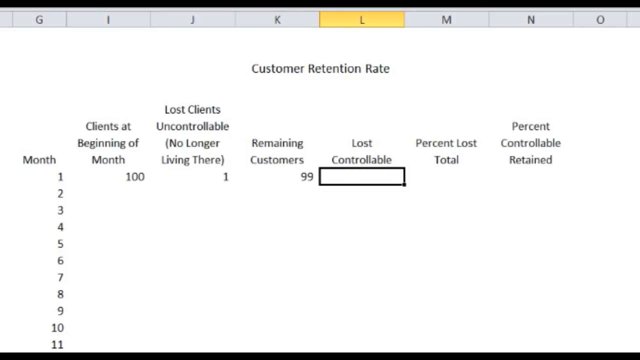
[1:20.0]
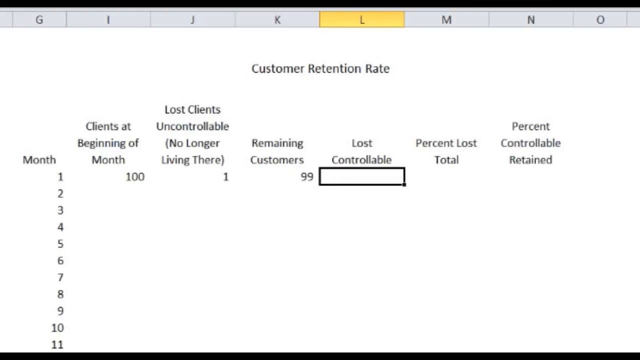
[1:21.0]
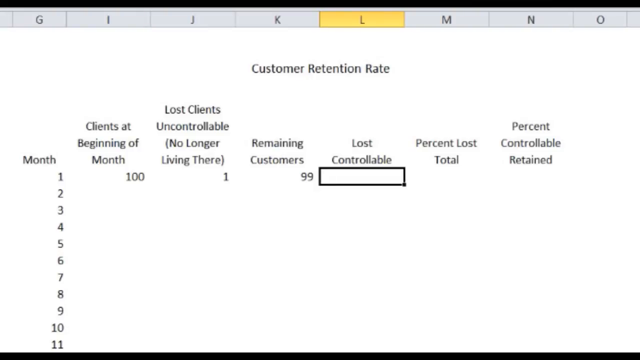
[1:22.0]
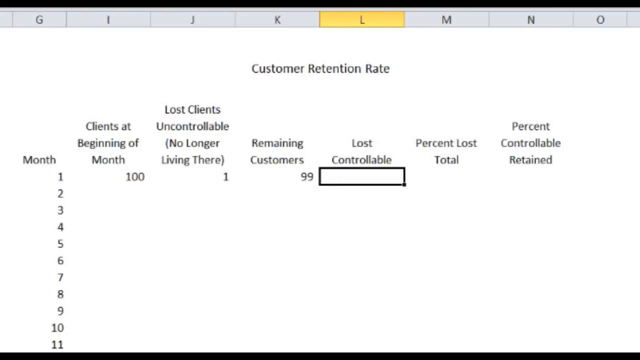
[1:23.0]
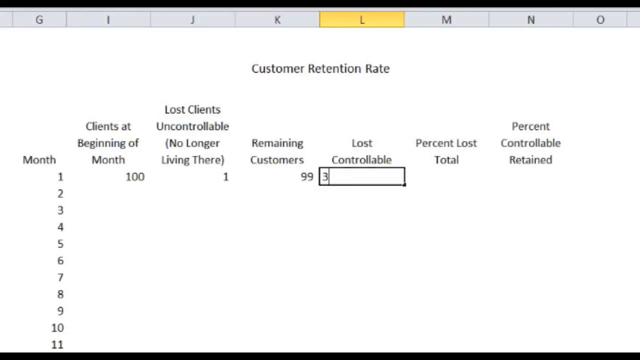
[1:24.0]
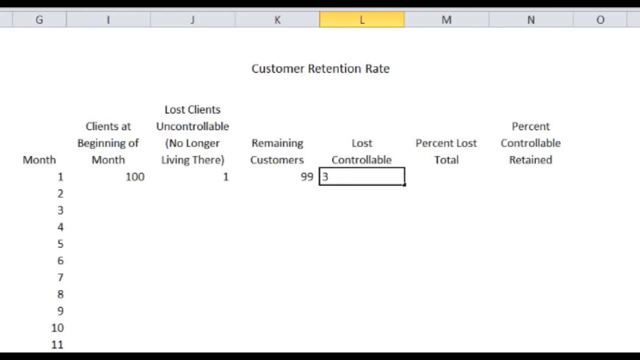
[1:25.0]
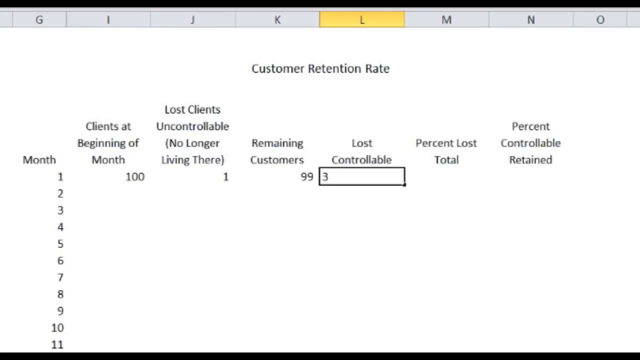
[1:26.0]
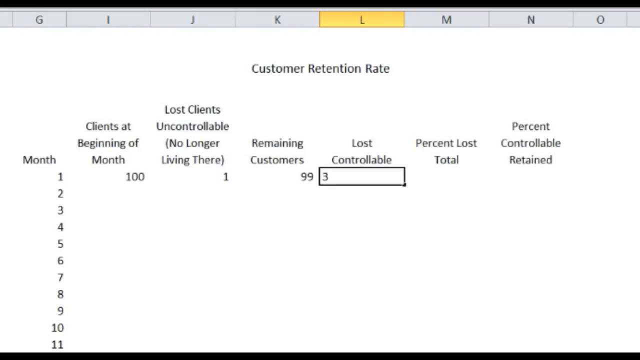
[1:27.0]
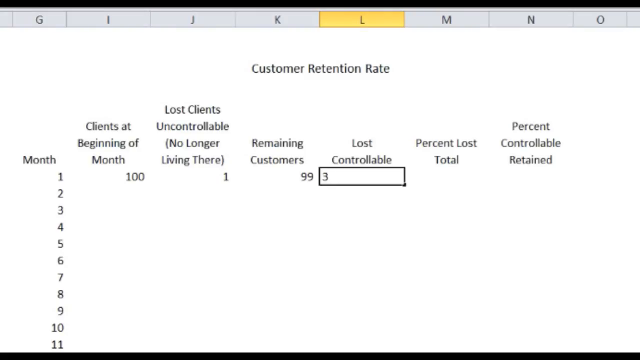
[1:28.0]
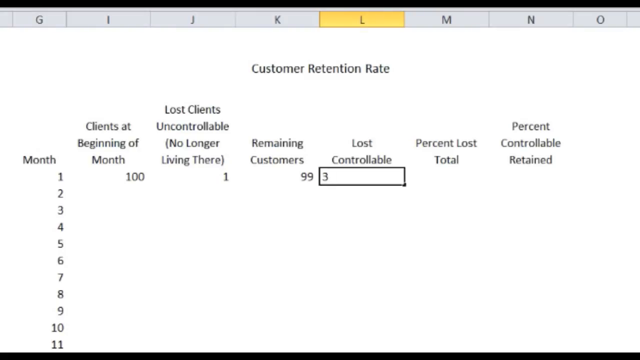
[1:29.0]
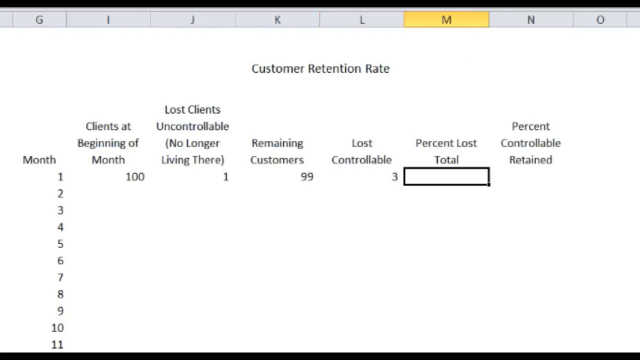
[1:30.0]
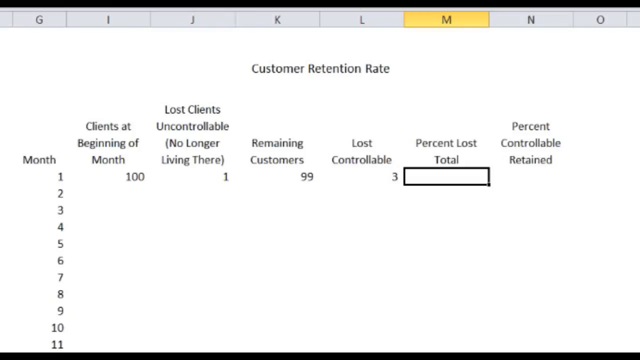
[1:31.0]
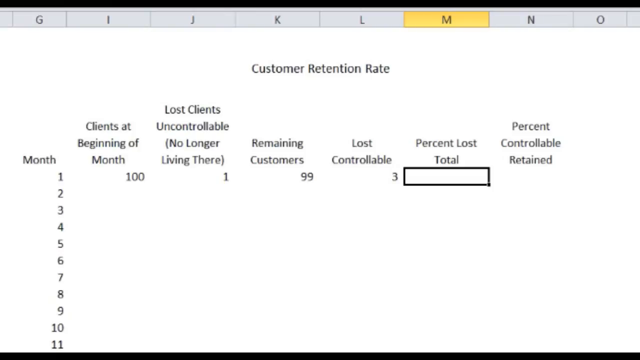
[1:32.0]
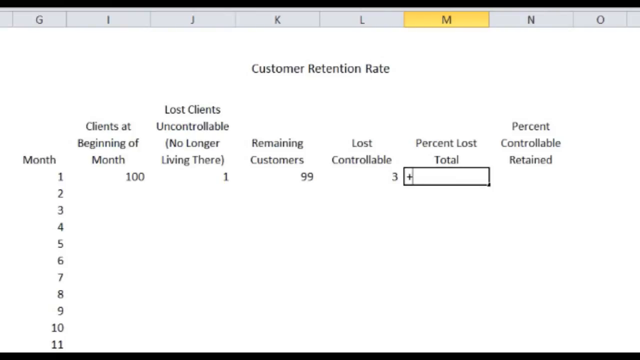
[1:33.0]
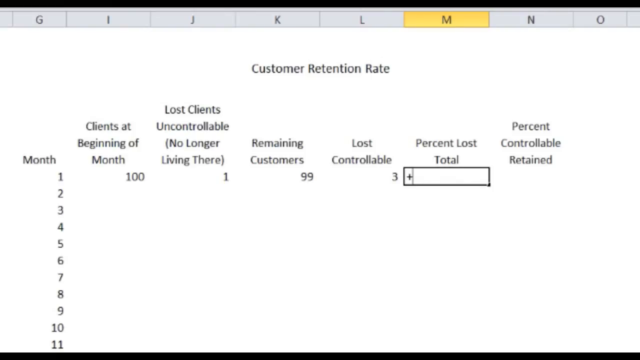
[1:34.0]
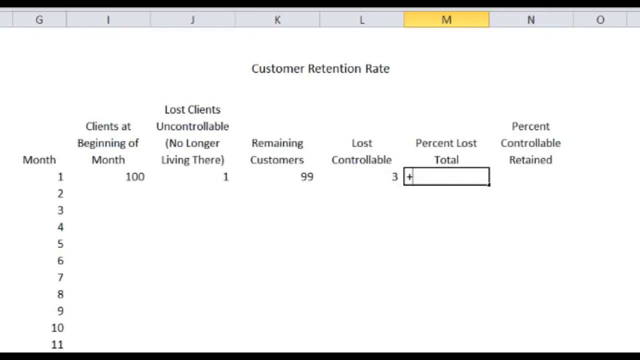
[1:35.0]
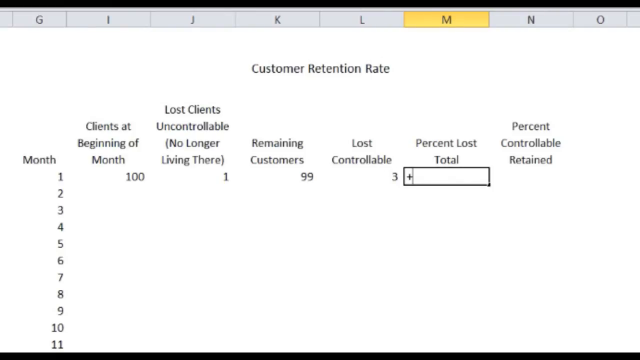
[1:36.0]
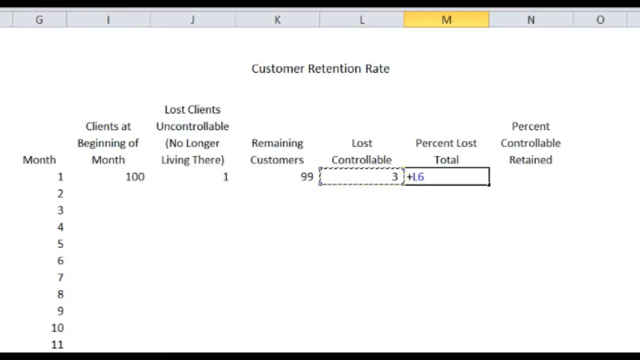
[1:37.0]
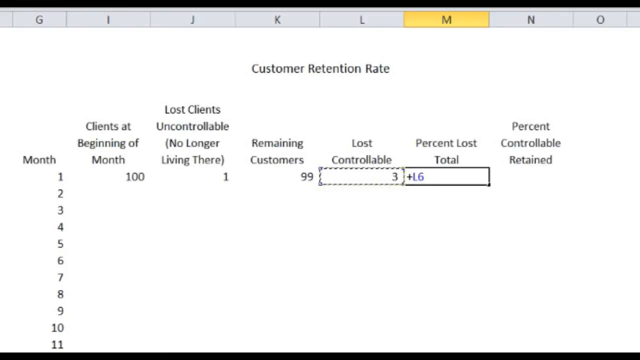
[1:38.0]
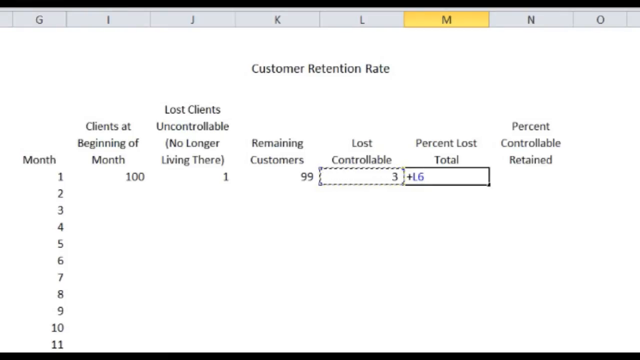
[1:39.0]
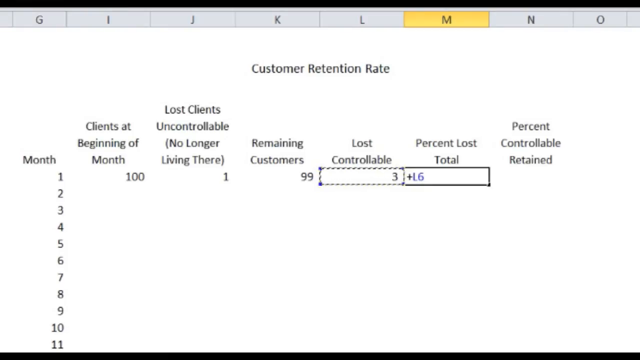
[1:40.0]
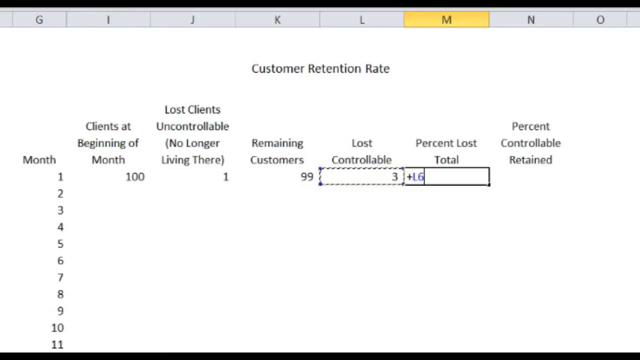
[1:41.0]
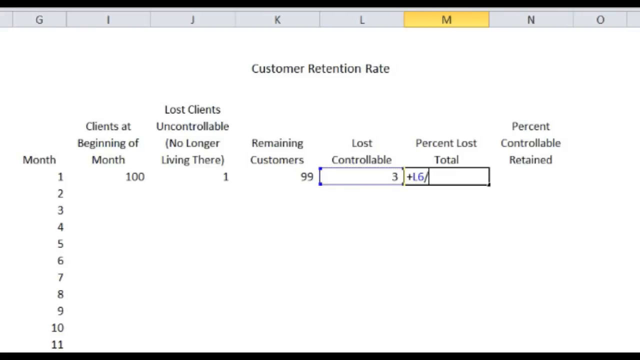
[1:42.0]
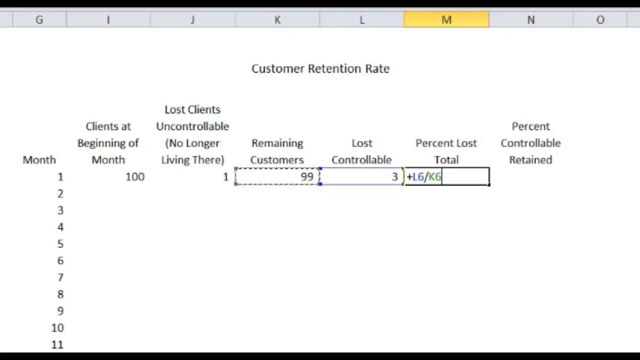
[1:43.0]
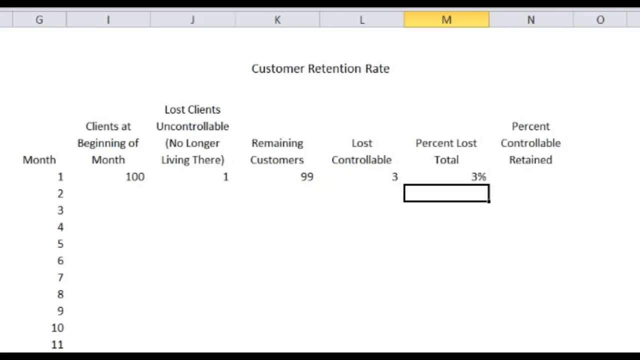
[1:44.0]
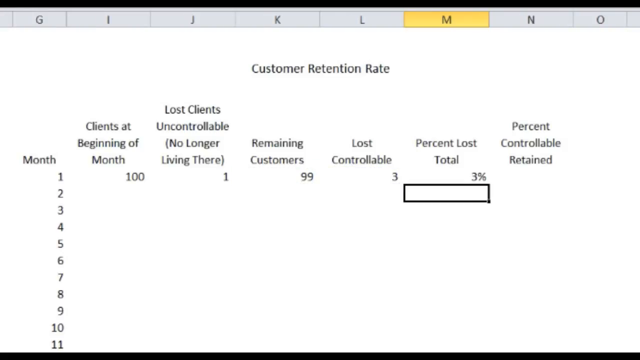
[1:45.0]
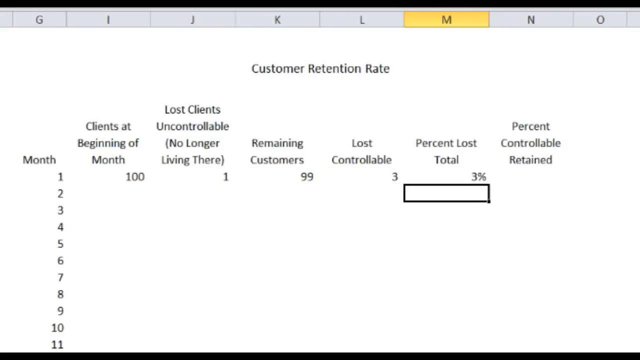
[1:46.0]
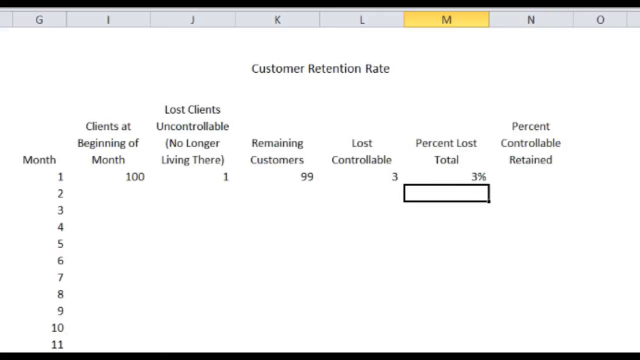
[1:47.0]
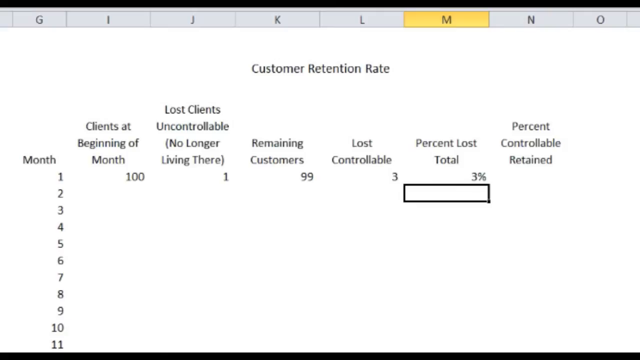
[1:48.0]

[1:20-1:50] An Excel spreadsheet has "Customer retention rate" written at the top. The first column shows "Month" with the month numbers in ascending order. Next to it is "Clients at beginning of the month", already filled in with the number 100 next to month one, then "Lost clients uncontrollable, no longer living there", prefilled with the number one, and "Remaining customers", which uses a formula of the clients at the beginning of the month minus the lost clients uncontrollable. These are followed by the "Lost controllable", "Percent lost total" and "Percent controllable retained" columns. With the first three values already filled in, the number three is entered in the lost controllable cell. Then the percent lost total cell is filled in with a formula dividing the lost controllable cell by the remaining customers cell to get 3%.